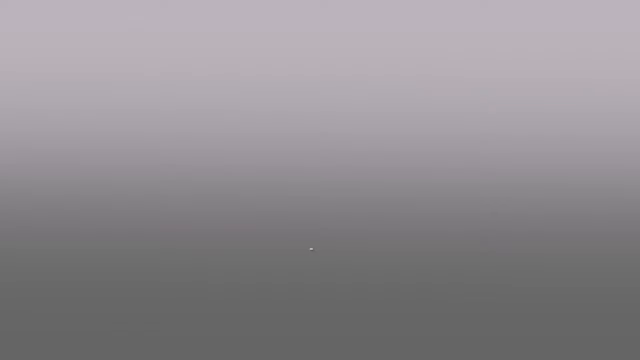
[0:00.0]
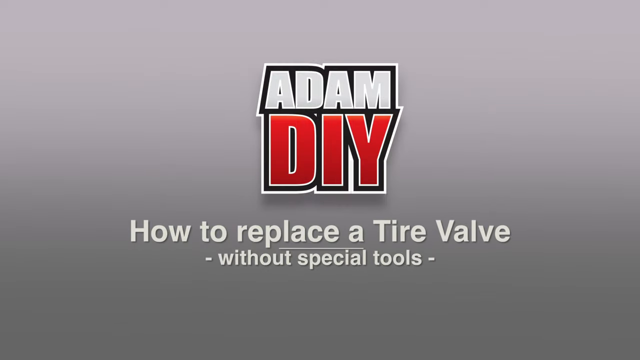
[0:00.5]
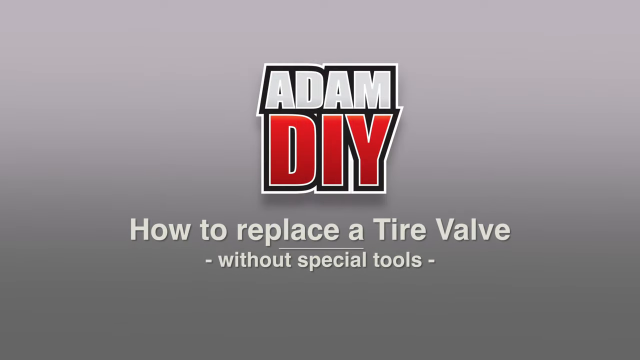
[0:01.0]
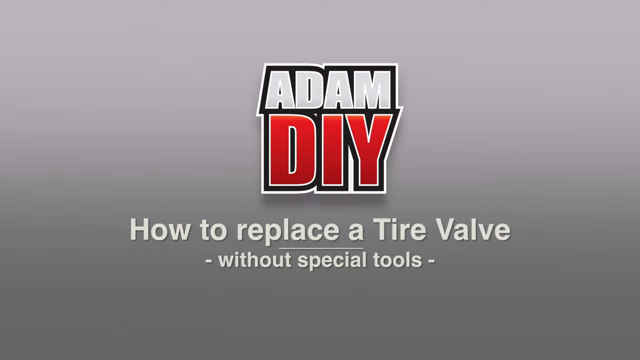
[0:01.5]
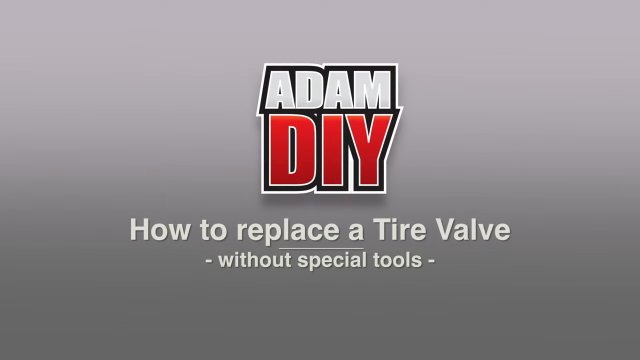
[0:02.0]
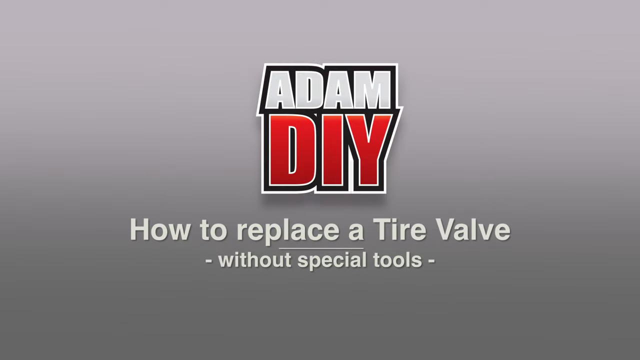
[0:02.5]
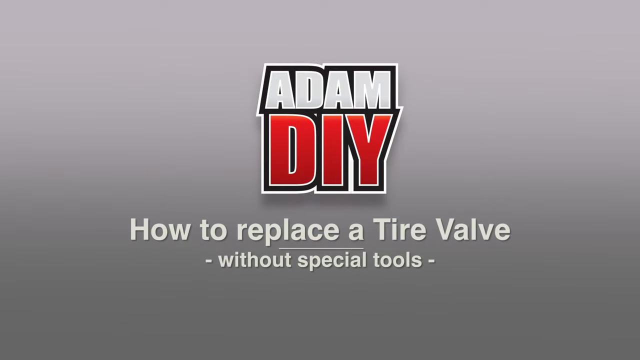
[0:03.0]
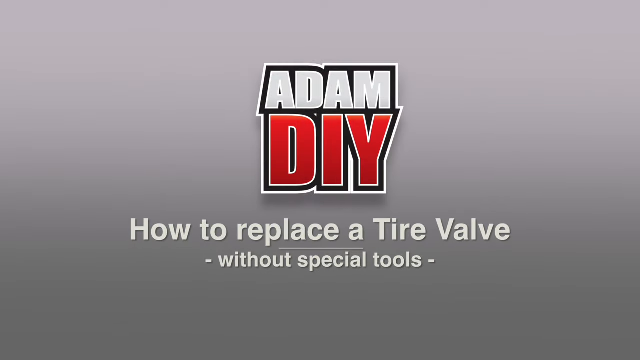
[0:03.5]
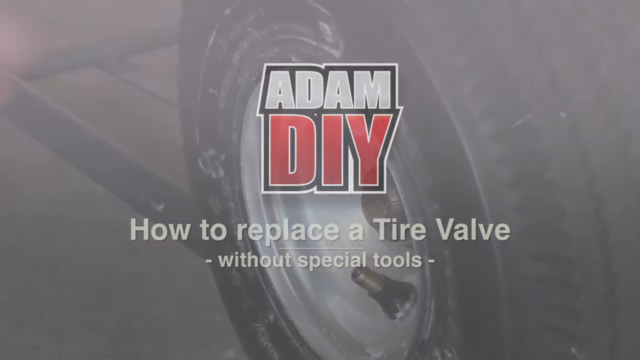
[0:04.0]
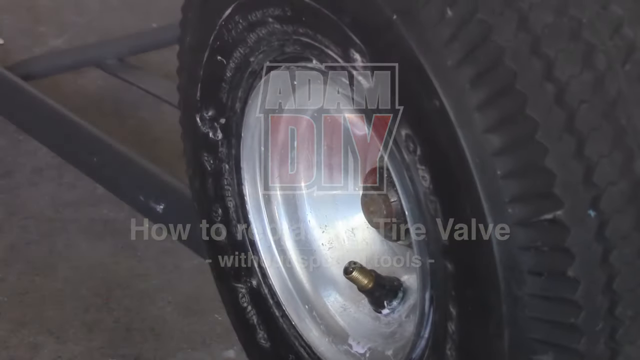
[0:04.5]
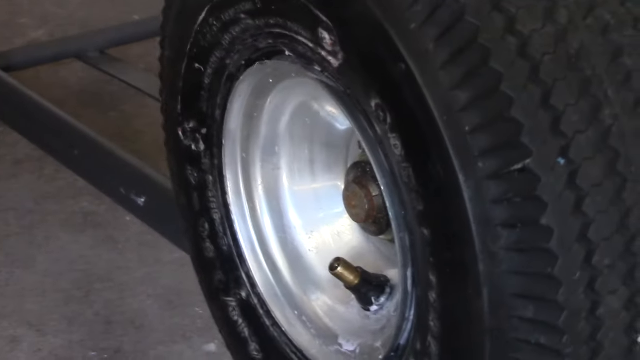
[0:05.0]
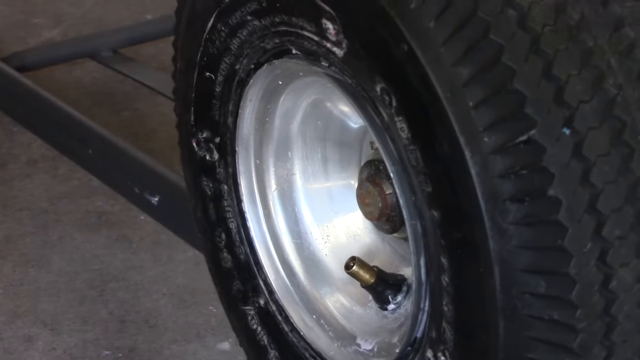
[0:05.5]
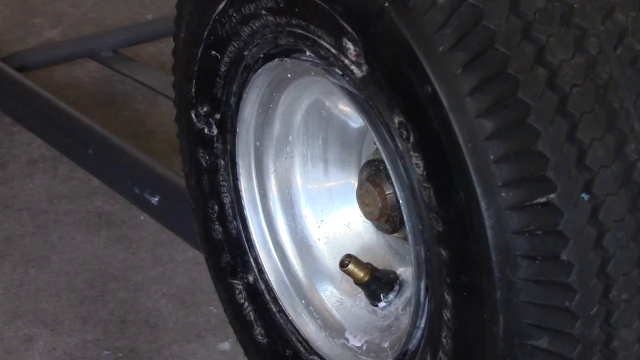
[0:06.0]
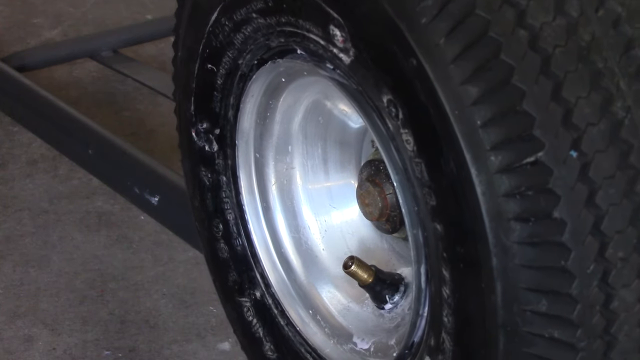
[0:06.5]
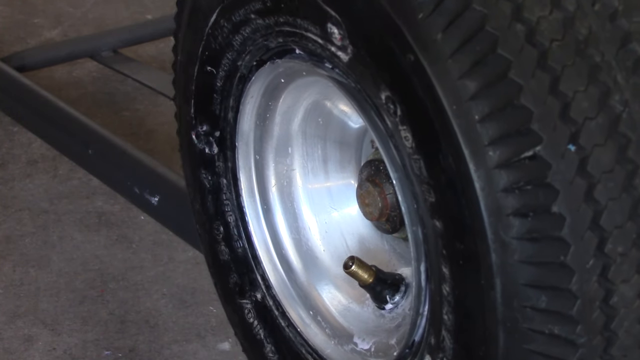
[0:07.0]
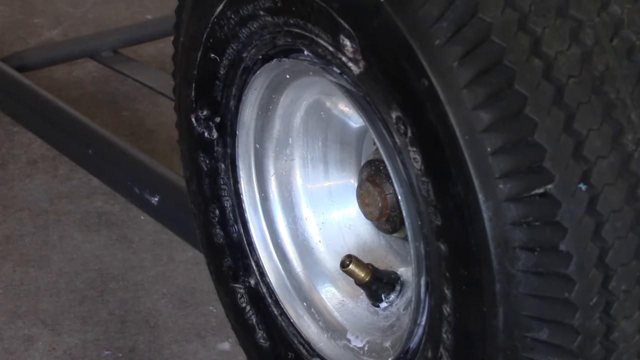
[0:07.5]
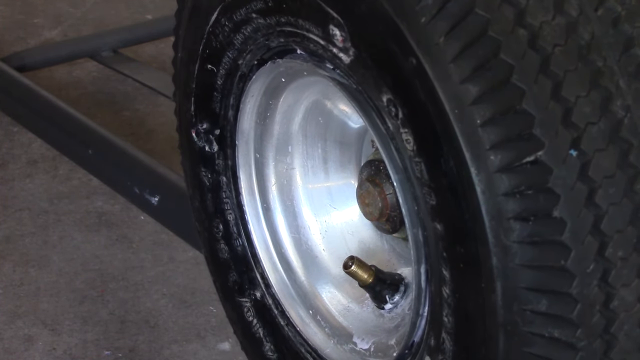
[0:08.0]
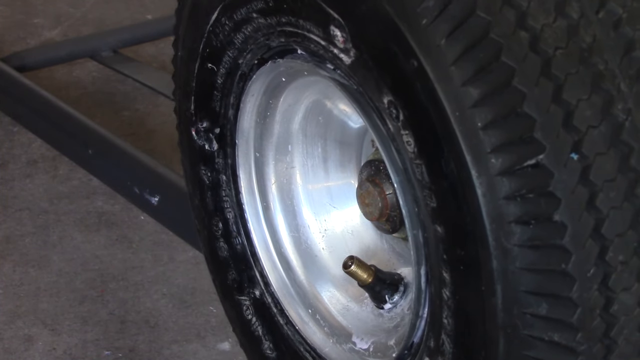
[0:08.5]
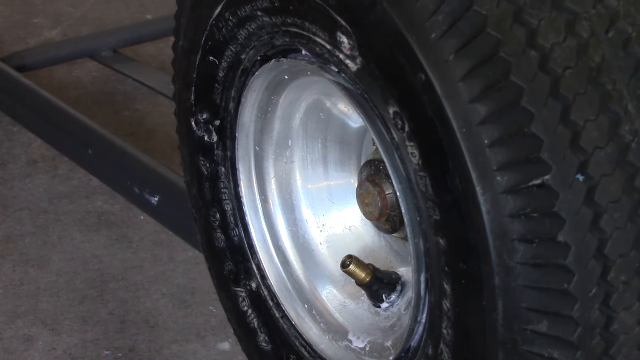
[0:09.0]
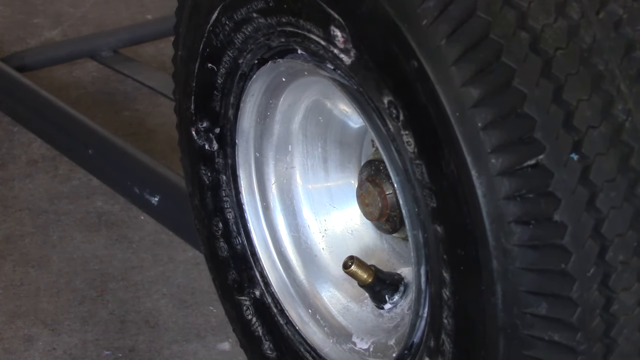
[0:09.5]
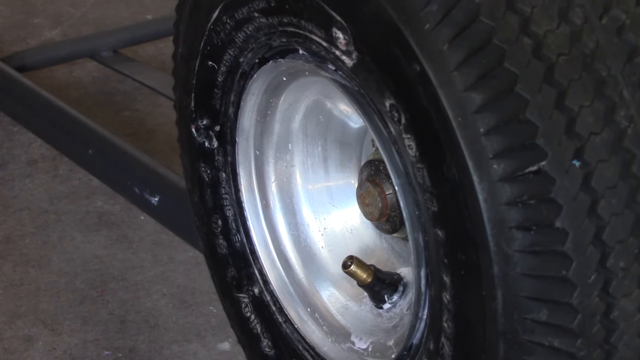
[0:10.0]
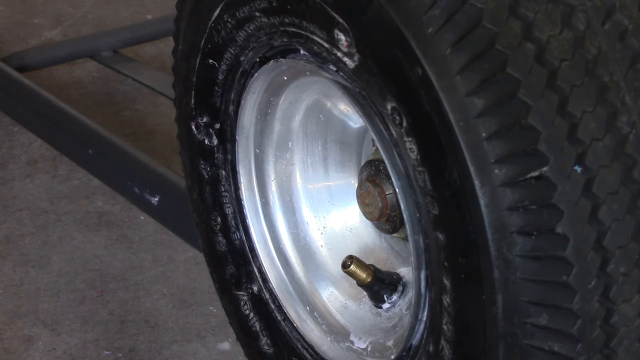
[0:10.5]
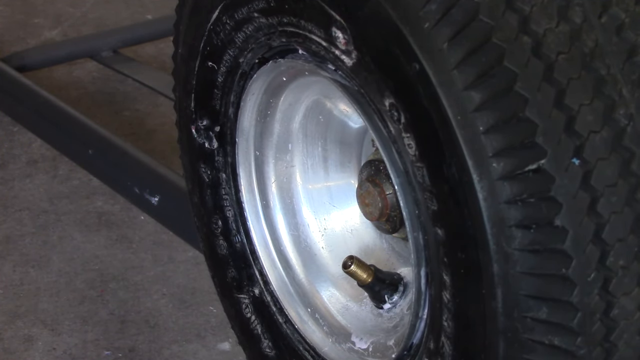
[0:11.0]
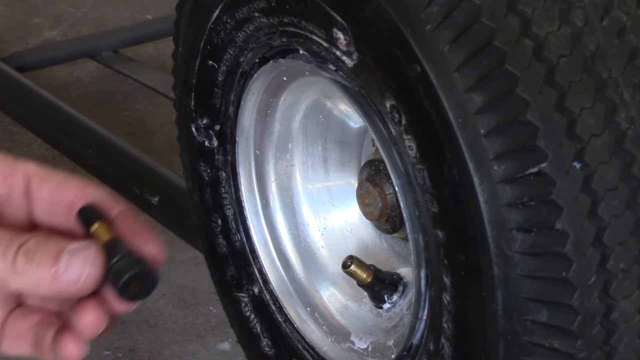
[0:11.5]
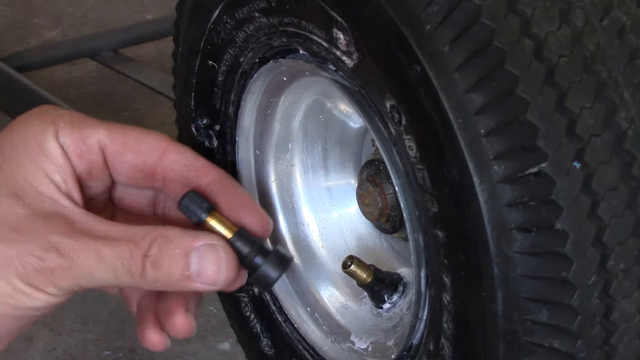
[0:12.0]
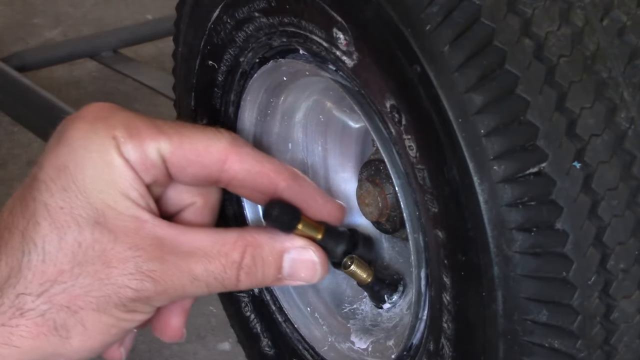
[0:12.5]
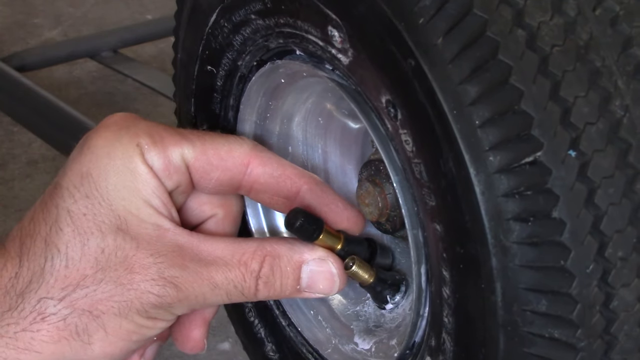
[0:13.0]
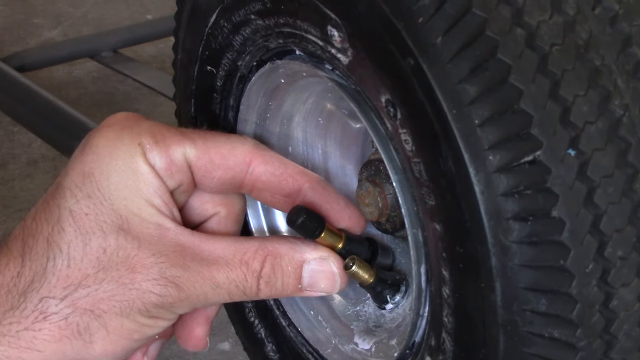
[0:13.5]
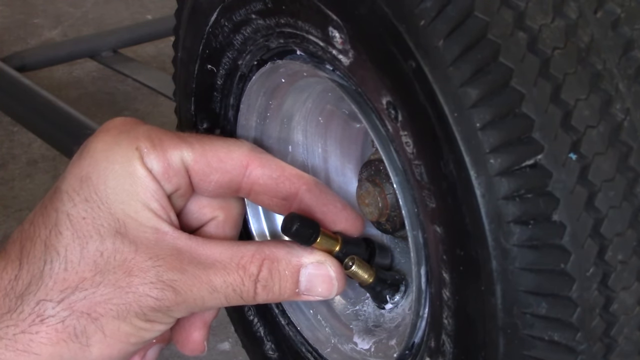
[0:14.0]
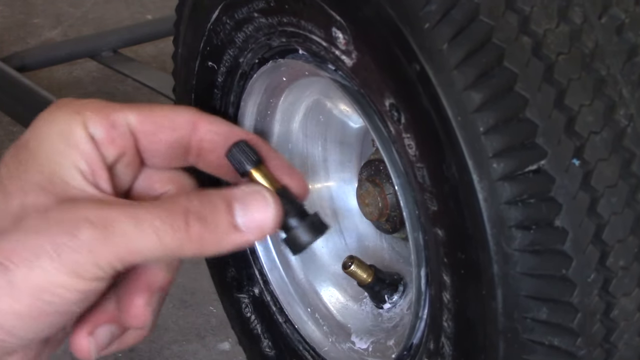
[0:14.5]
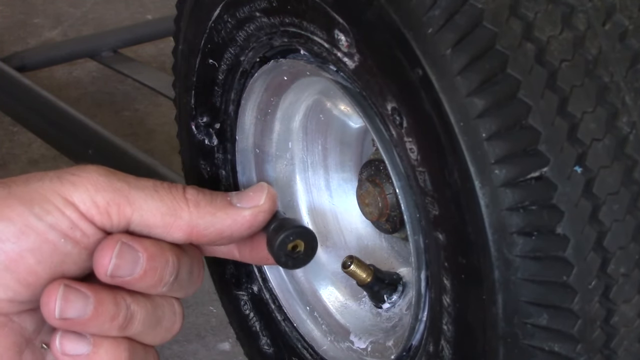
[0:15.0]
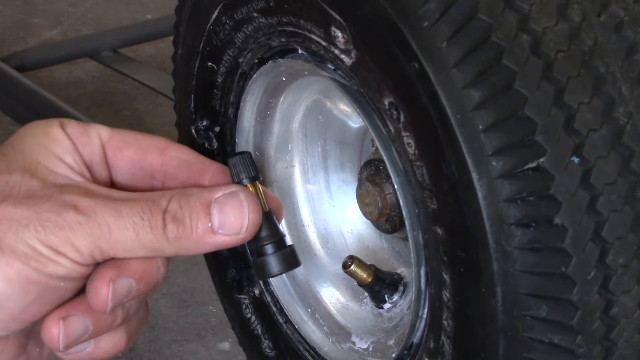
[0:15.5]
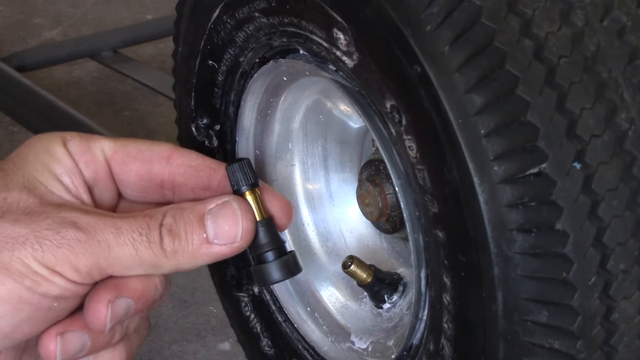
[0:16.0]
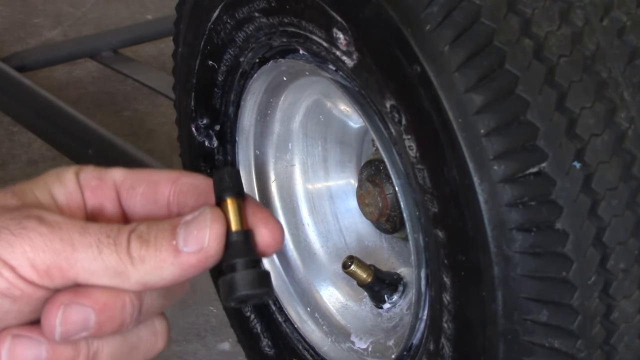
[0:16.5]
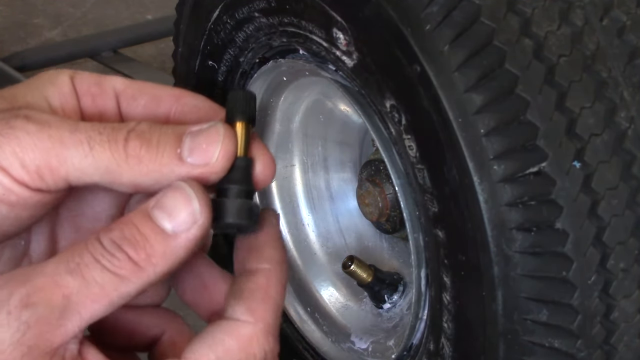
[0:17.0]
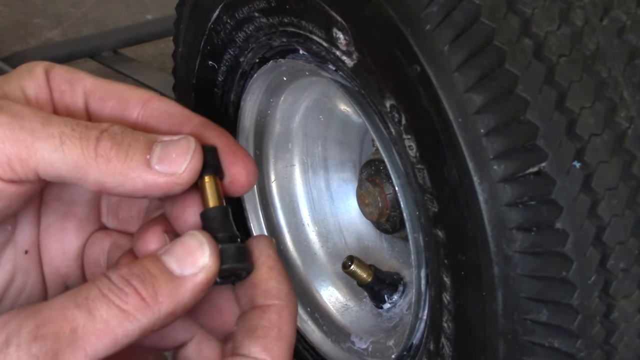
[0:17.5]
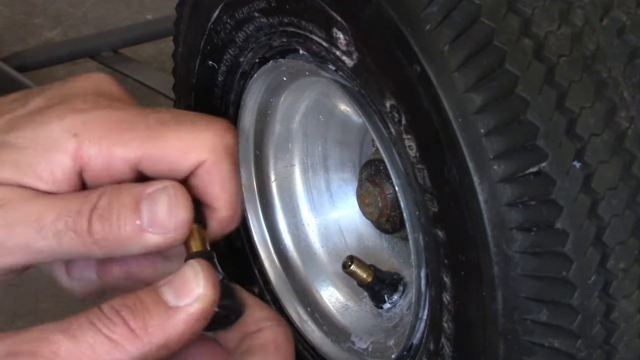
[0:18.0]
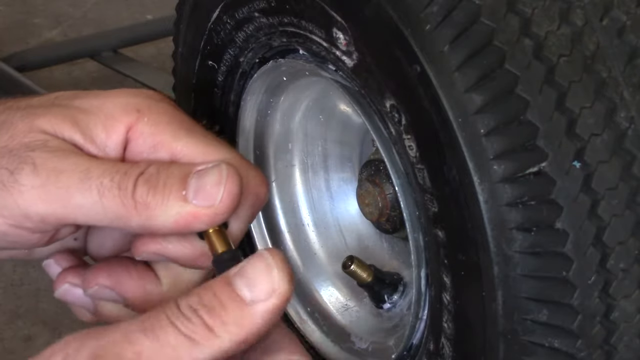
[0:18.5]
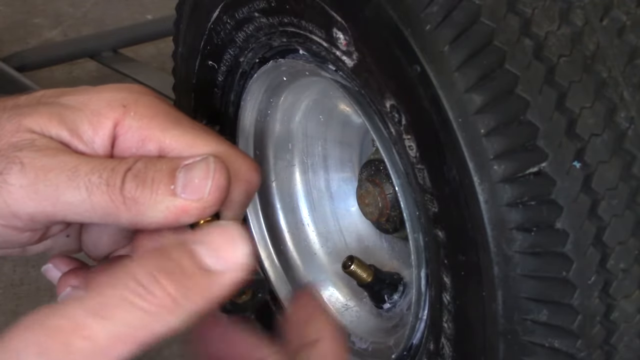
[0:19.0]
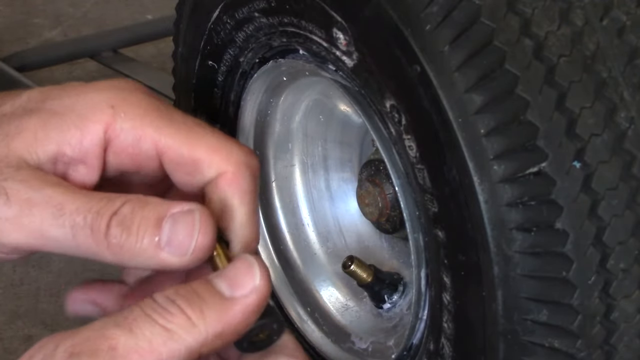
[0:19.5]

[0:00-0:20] This Adam DIY video shows how to replace a tire valve without special tools. It opens on a close-up of a tire moving around, showing the black rubber portion of the tire and the valve stem, which has no cap on it. The tire looks like it has something applied to it, as it appears extremely shiny and wet. A man's left hand enters the frame, gripping a tire valve between the forefinger and thumb. He places the tire valve up near the valve that is already connected to the tire and moves it back and forth a bit, most likely checking the fit. The tire valve appears to be made of black rubber and a gold metal material. He turns the valve cap over, showing the bottom portion of the valve stem, then takes the valve stem between both hands and uses his fingers to twist the cap off.